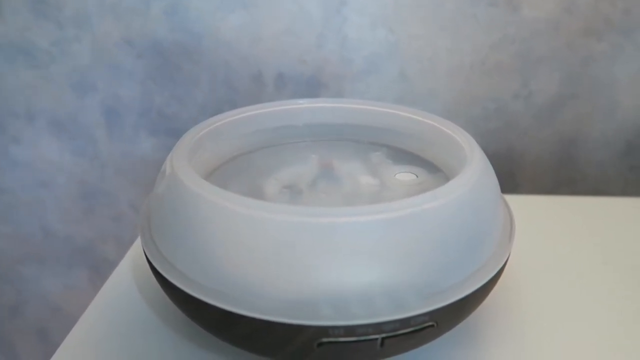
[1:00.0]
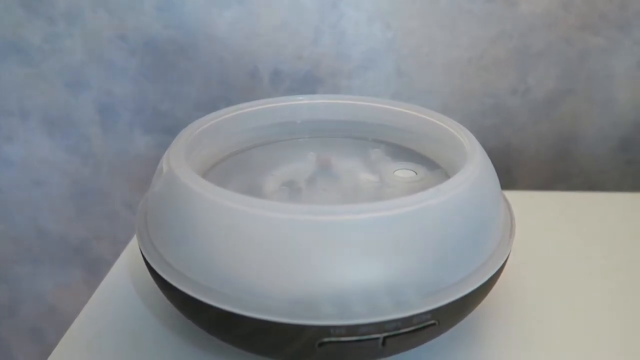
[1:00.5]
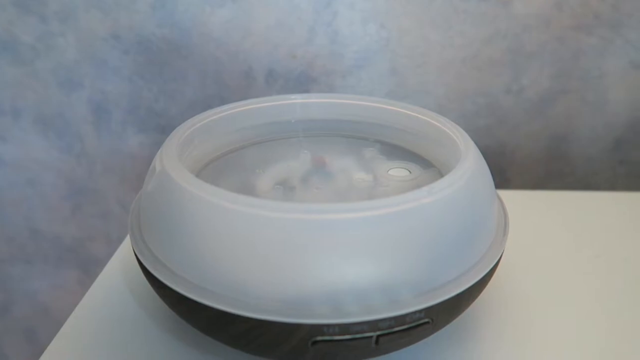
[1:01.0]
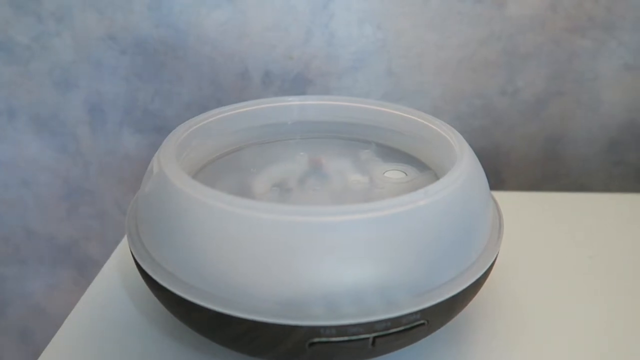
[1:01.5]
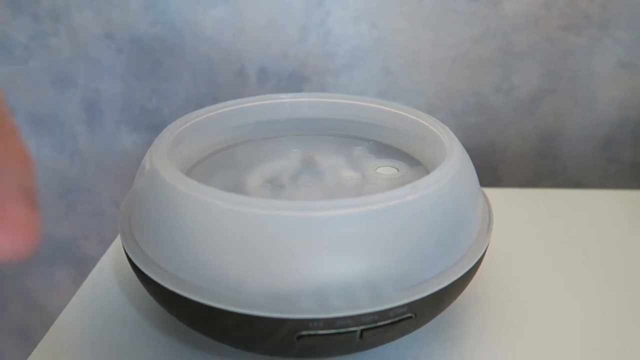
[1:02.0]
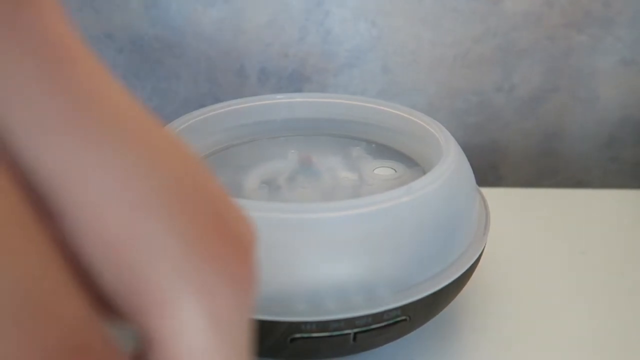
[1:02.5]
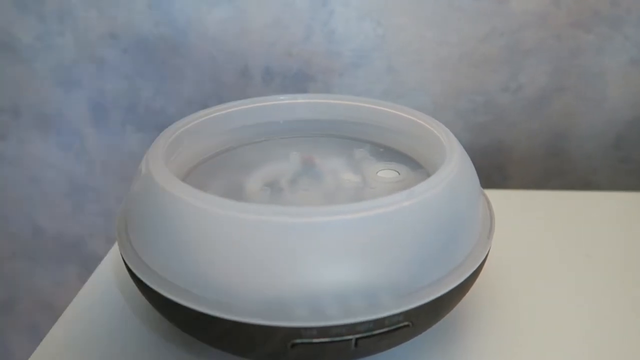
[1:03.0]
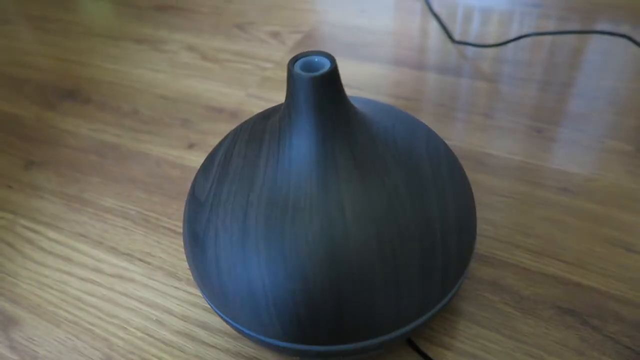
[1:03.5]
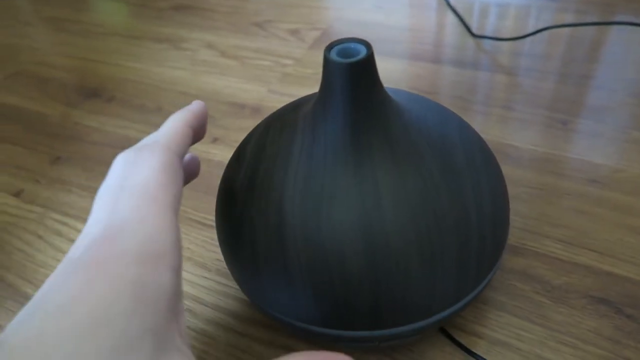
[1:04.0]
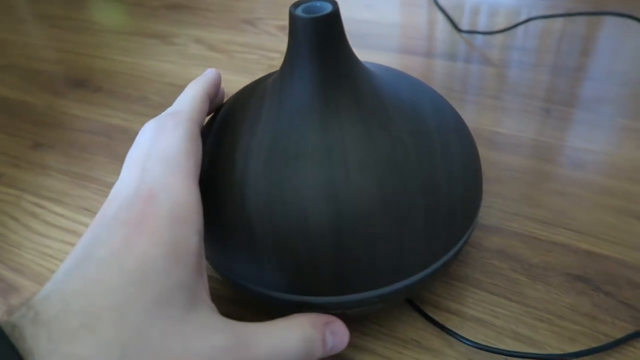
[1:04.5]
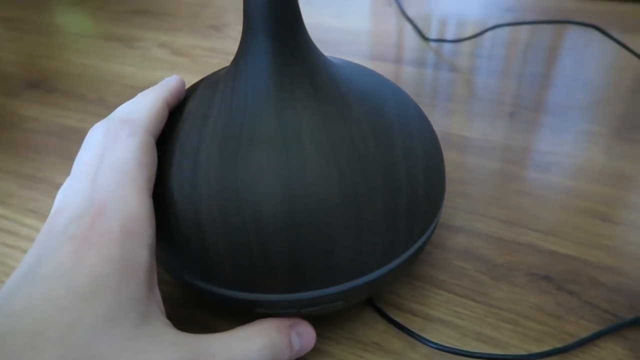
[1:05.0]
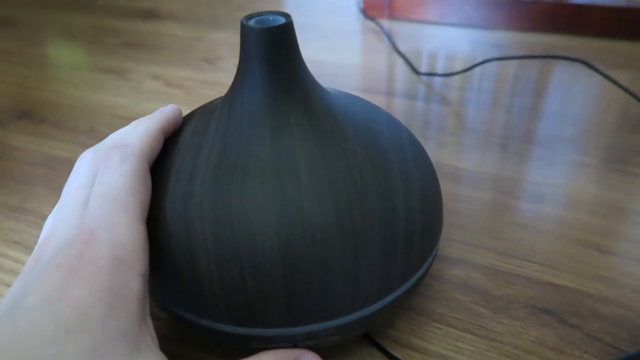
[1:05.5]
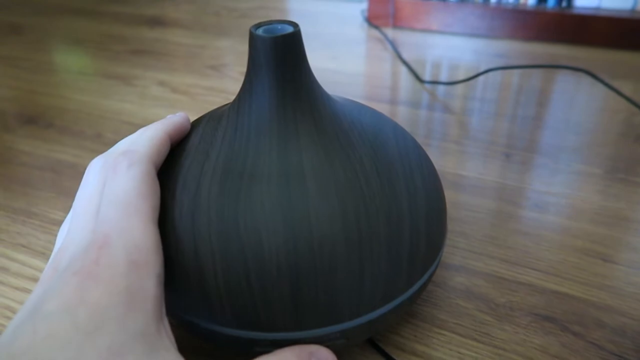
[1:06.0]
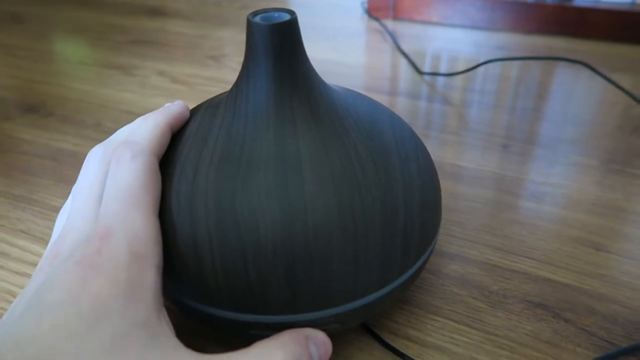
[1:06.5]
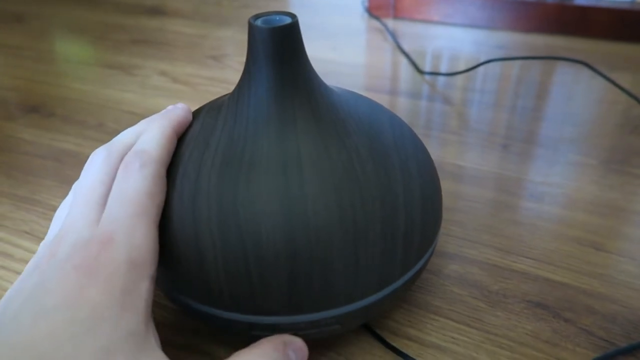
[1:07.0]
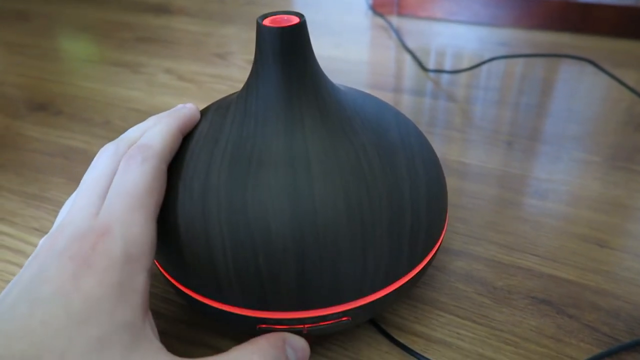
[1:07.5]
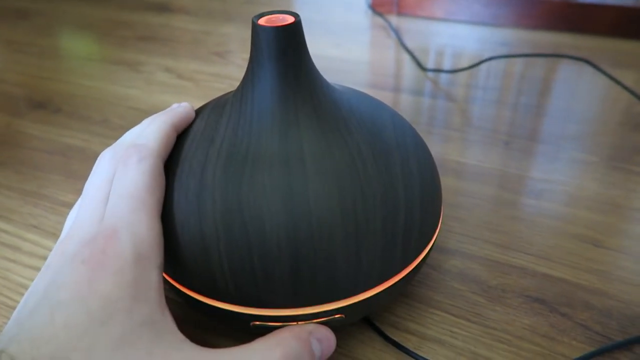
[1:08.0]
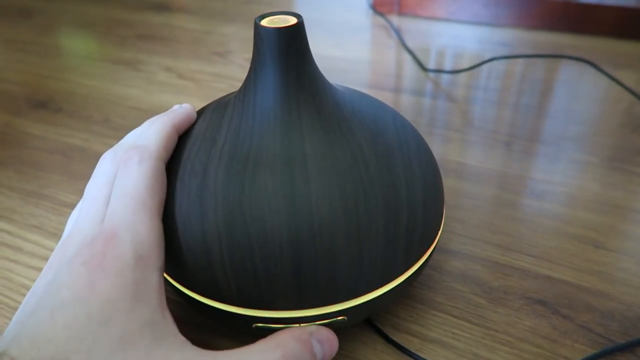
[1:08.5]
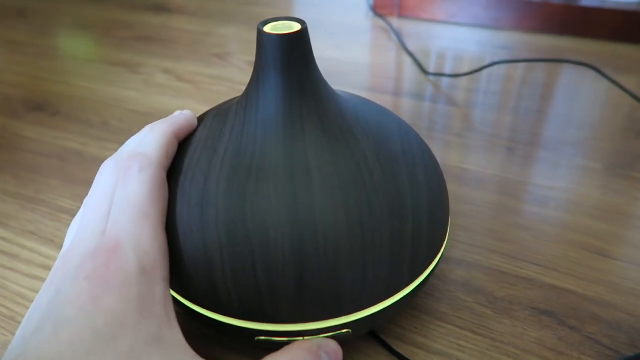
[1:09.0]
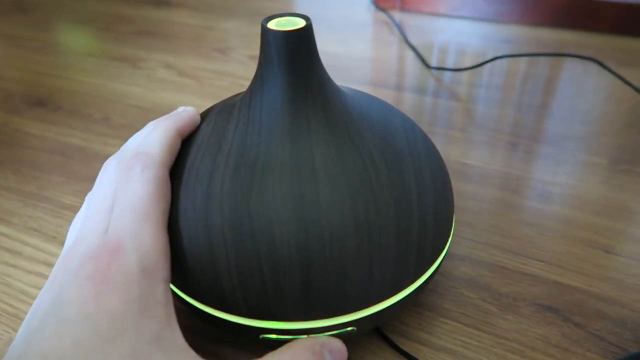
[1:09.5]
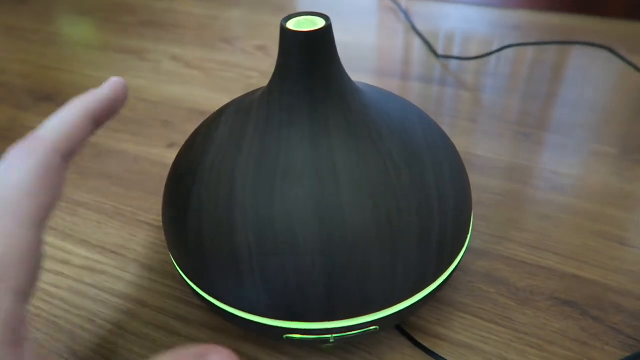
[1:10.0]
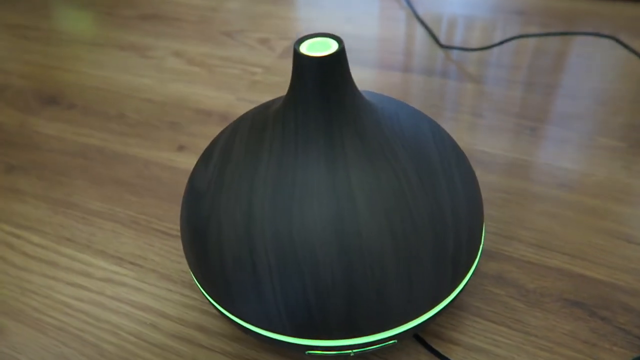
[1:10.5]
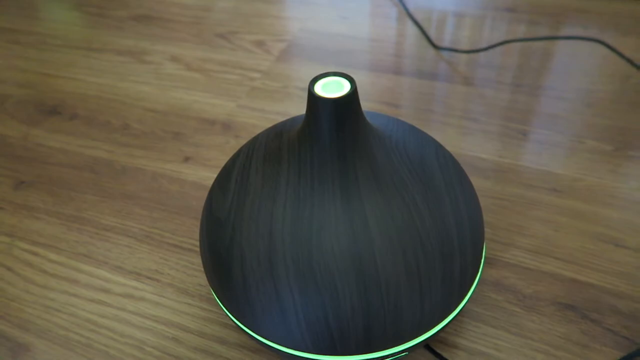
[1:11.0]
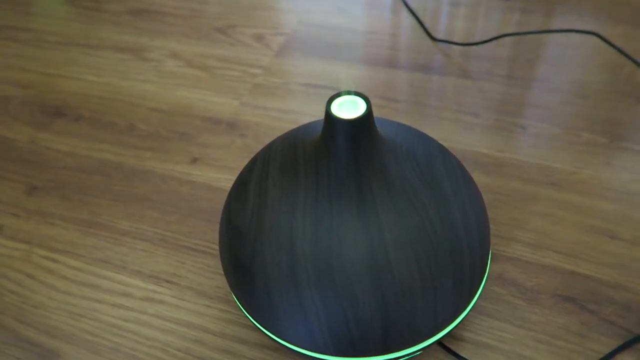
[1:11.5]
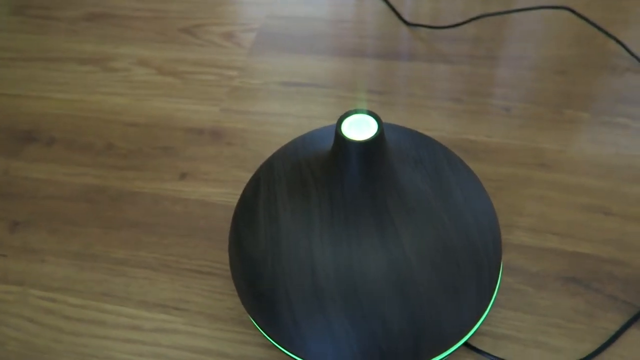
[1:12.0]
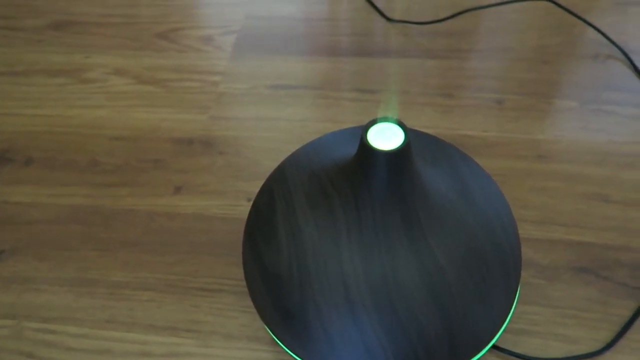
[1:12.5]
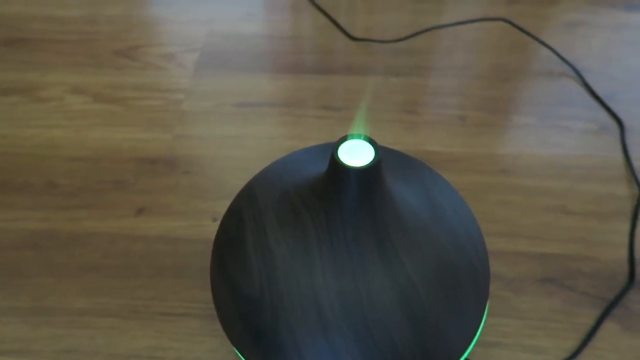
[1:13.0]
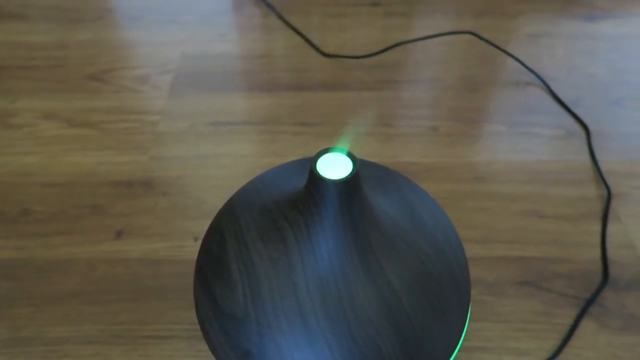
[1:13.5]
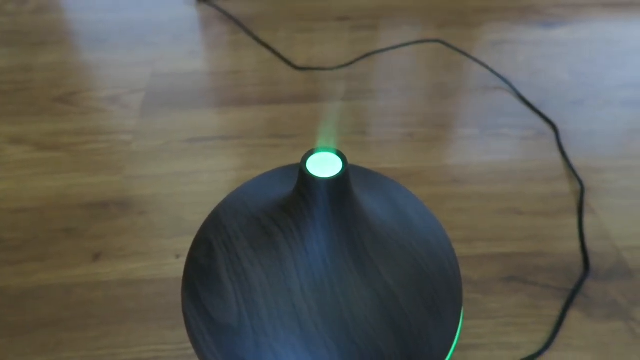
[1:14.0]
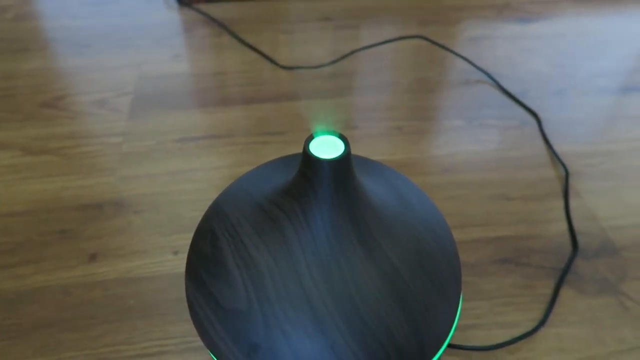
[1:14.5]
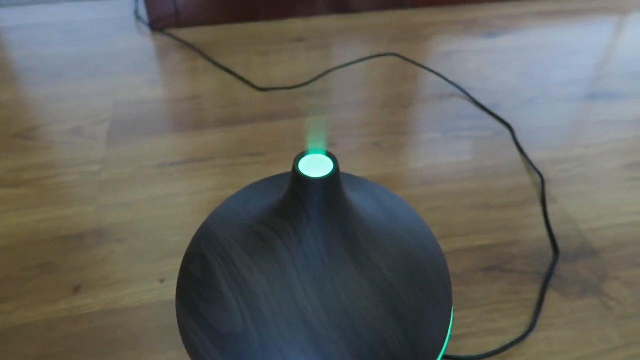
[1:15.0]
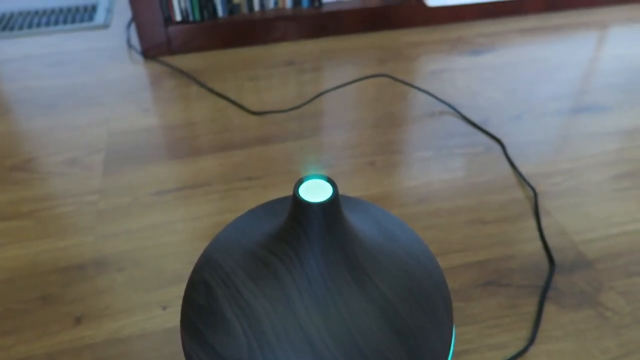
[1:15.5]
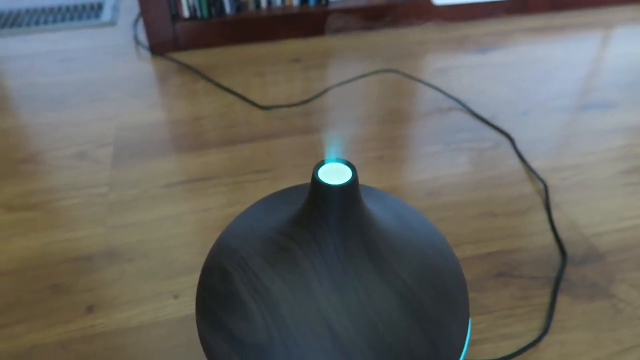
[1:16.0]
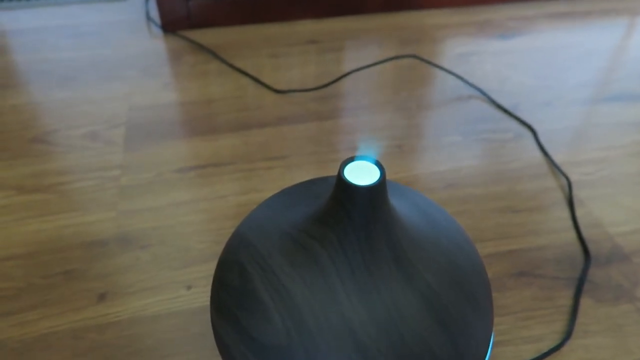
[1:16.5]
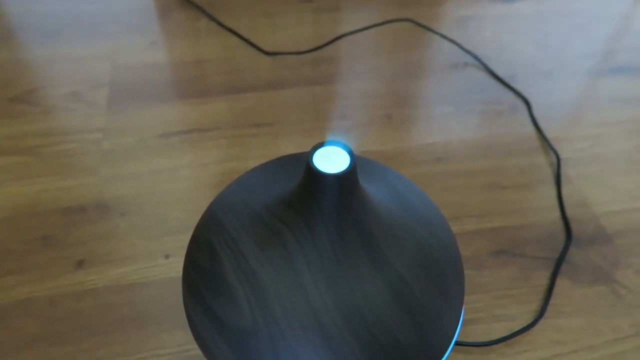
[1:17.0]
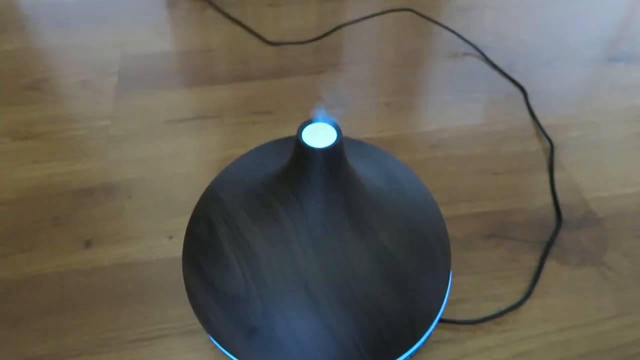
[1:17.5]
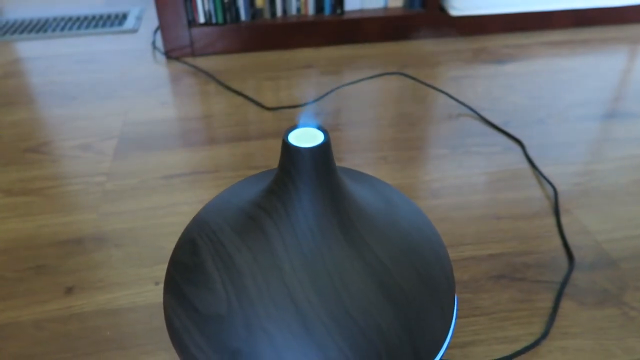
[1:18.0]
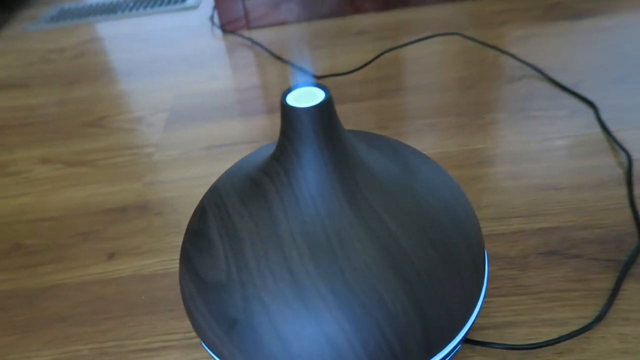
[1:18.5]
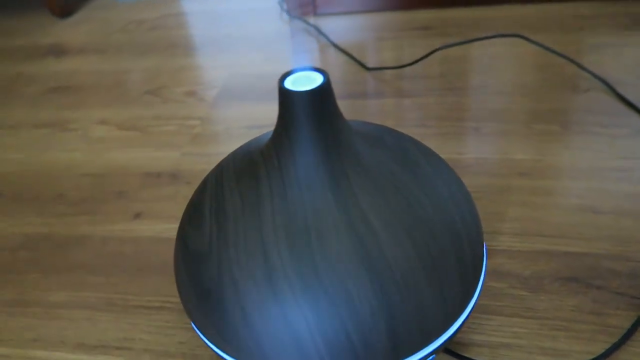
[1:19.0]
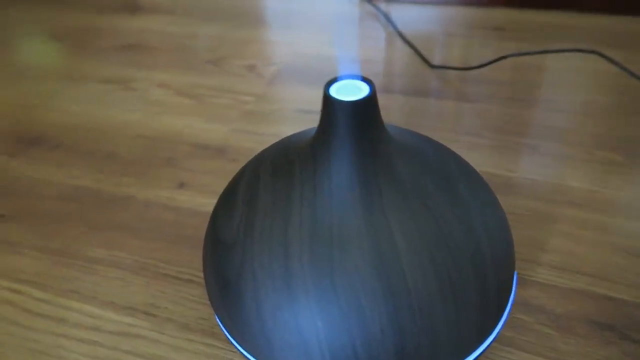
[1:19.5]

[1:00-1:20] With the lid of the diffuser off, it is filled with water and a couple of drops of essential oil have been added. In a separate shot, someone reaches for the diffuser, which is black and looks like a vase or a tagine, holding it with the left hand. It is on a wooden floor, with an electrical cable running in the background. The diffuser lights up a sort of red-orange colour at the base and at the opening, then changes to green. The hand lets go of the diffuser, and it is viewed from above: a vapour comes from the top, coloured light green like the diffuser's lighting, drifting slightly to the right of the screen. The camera then drops down so it is no longer right above, and the light at the bottom of the diffuser is seen again, still a sort of greenish colour.